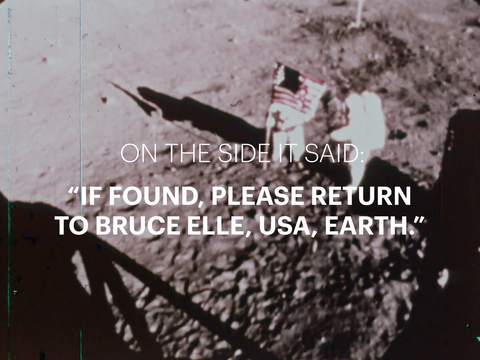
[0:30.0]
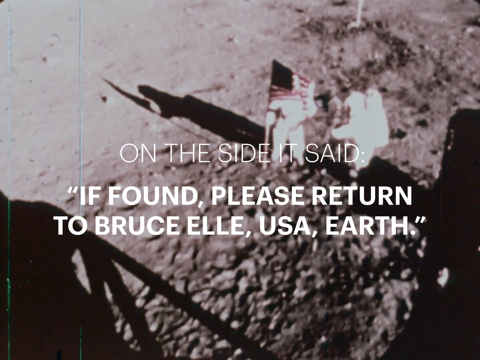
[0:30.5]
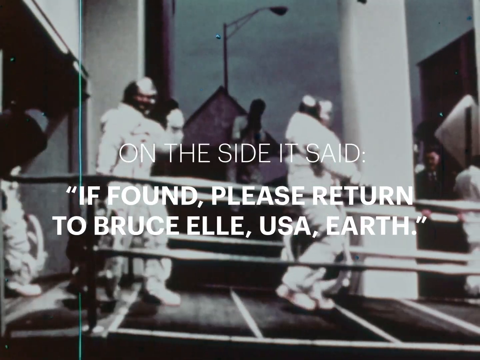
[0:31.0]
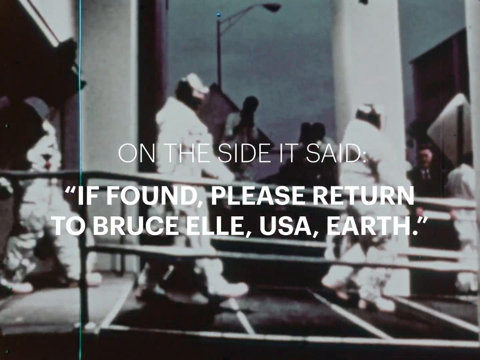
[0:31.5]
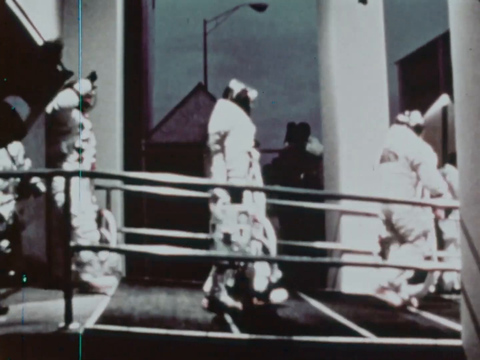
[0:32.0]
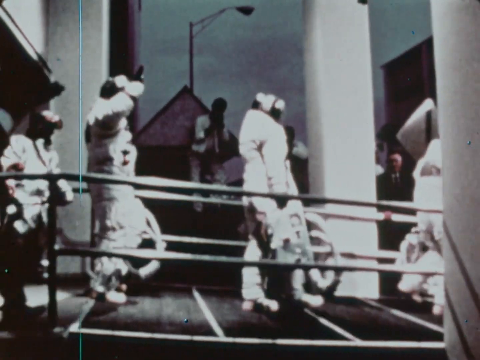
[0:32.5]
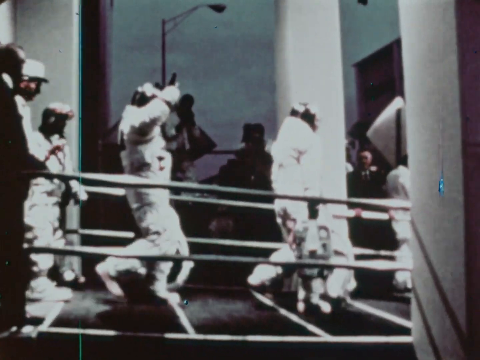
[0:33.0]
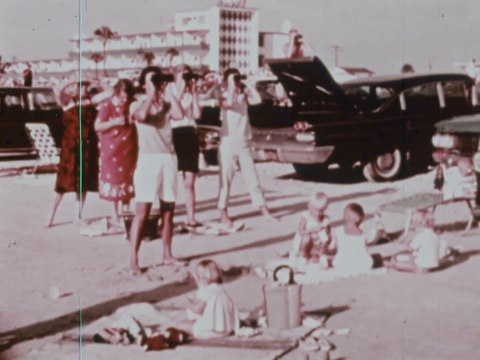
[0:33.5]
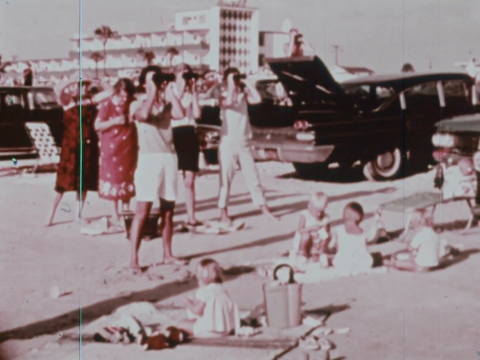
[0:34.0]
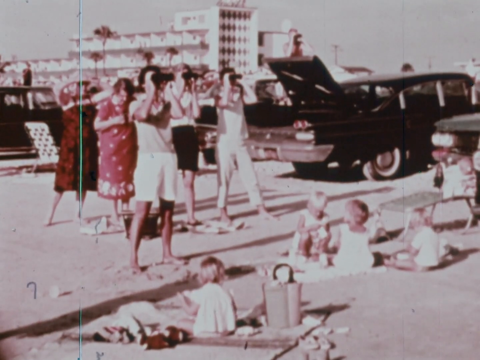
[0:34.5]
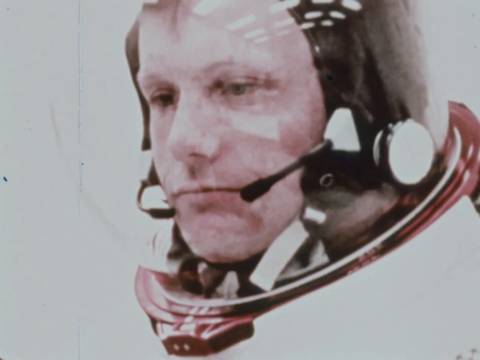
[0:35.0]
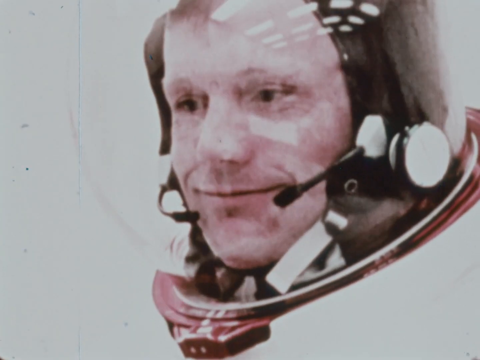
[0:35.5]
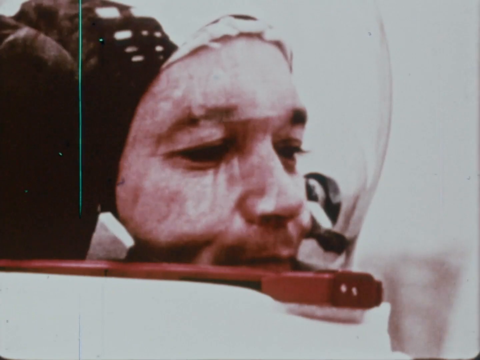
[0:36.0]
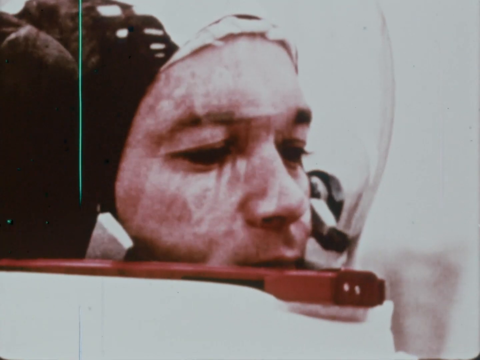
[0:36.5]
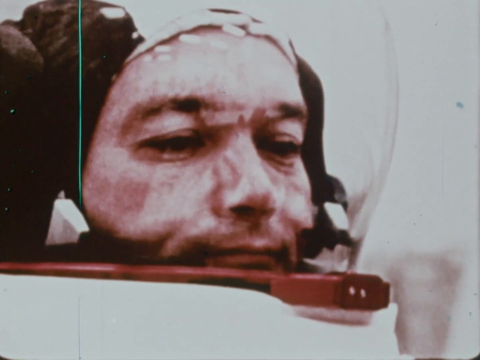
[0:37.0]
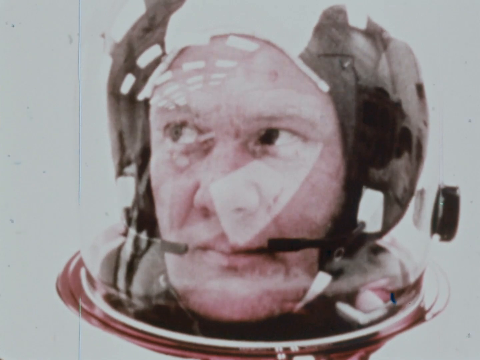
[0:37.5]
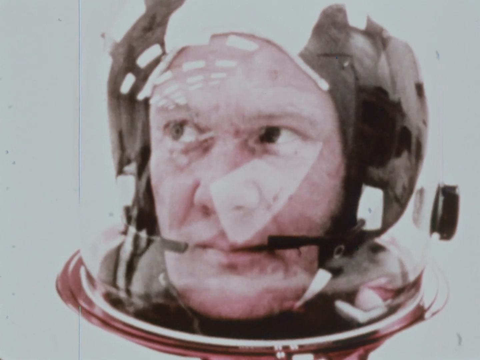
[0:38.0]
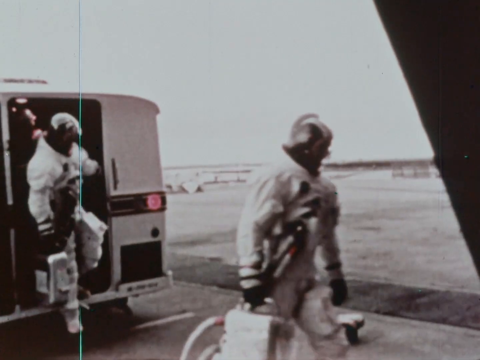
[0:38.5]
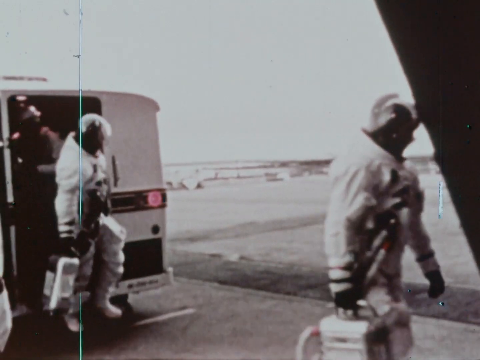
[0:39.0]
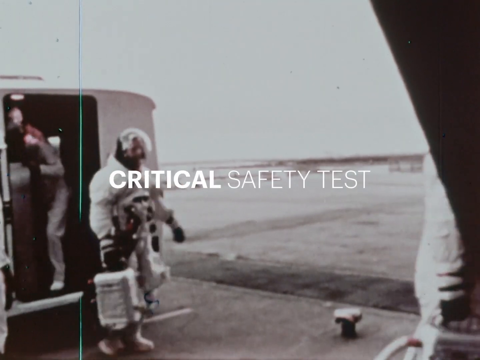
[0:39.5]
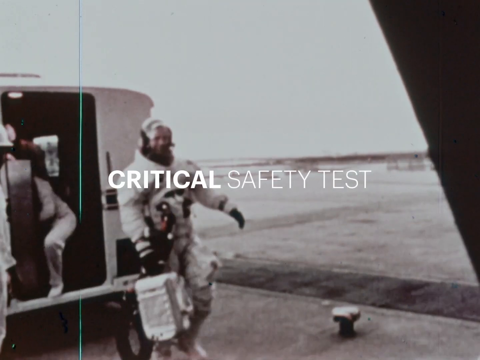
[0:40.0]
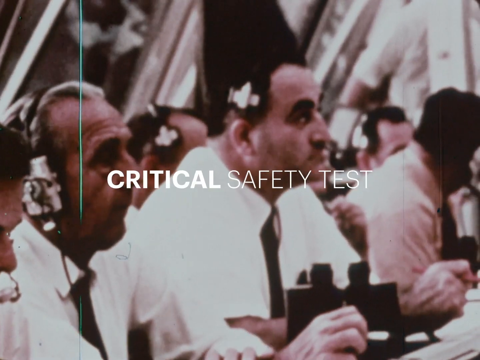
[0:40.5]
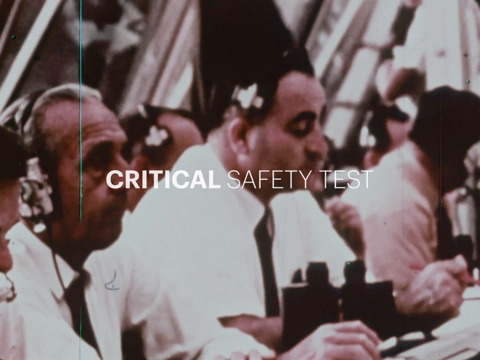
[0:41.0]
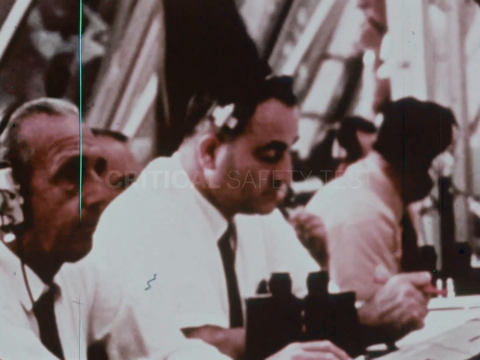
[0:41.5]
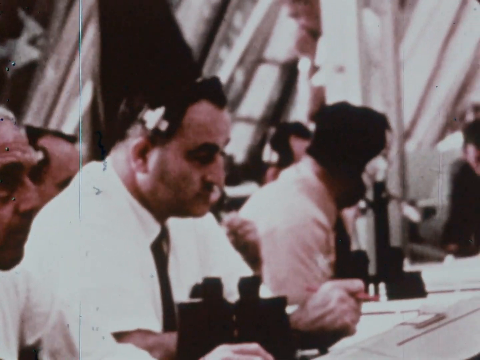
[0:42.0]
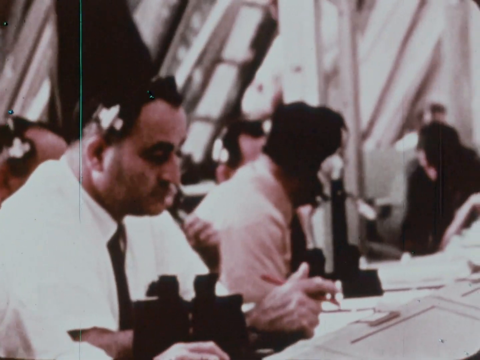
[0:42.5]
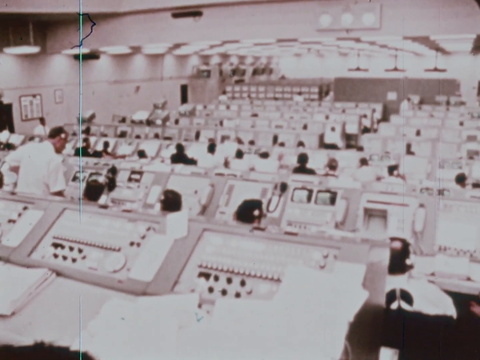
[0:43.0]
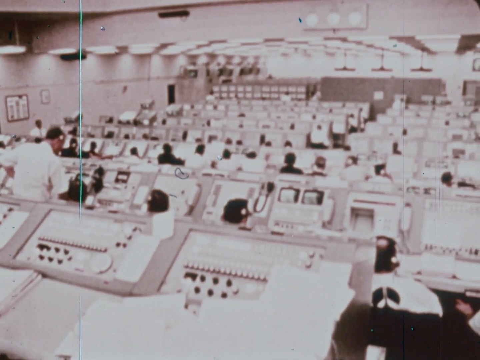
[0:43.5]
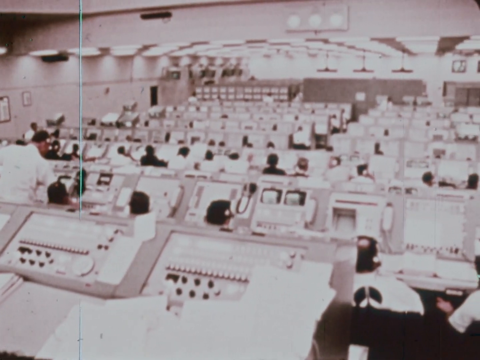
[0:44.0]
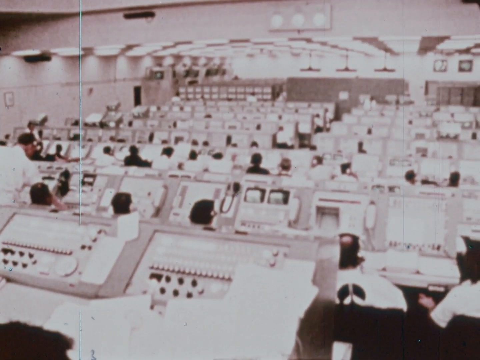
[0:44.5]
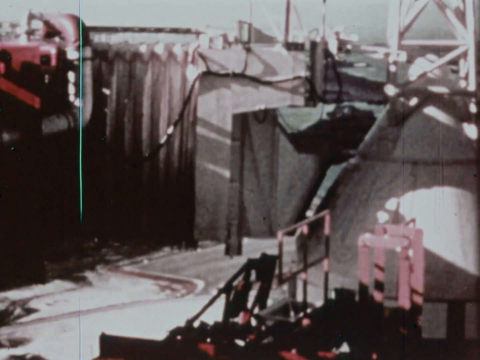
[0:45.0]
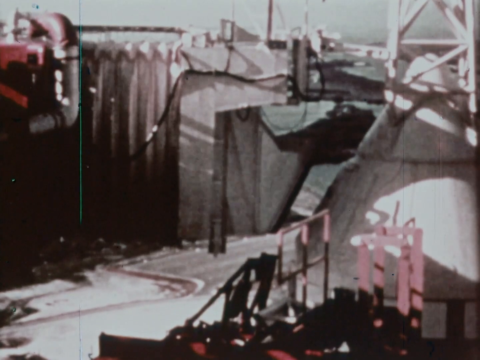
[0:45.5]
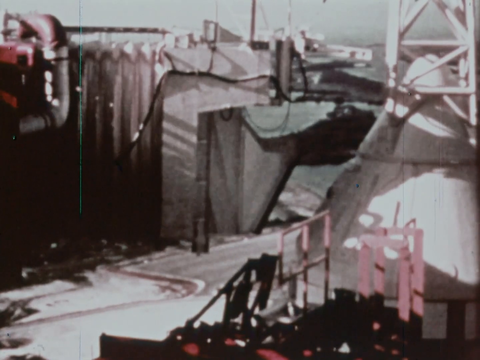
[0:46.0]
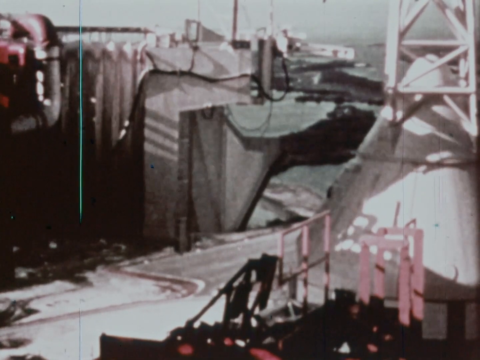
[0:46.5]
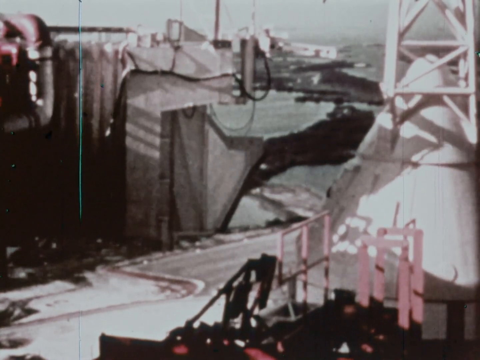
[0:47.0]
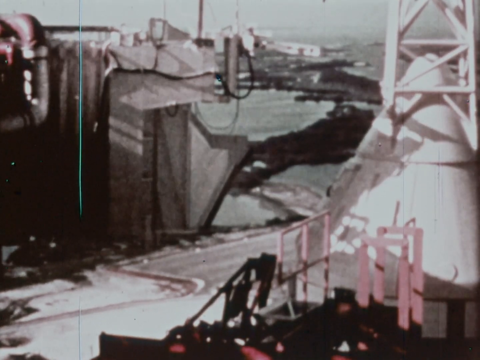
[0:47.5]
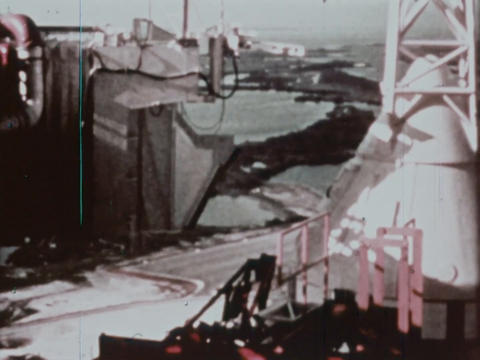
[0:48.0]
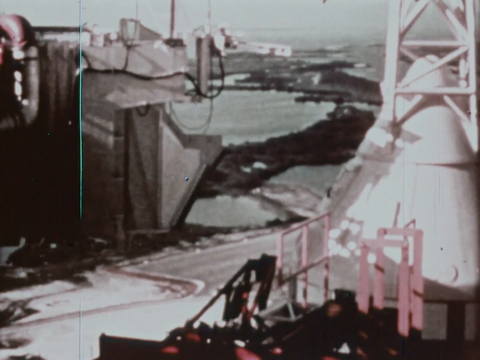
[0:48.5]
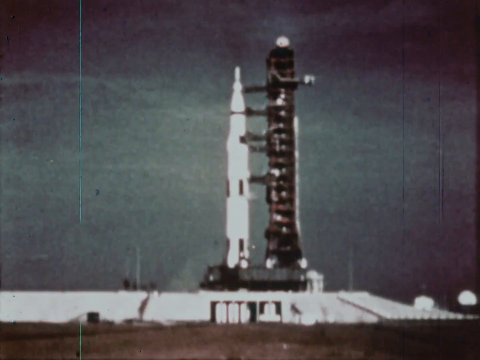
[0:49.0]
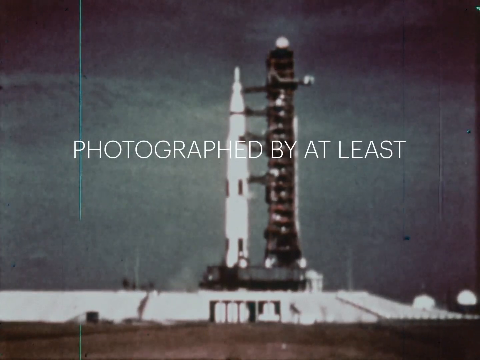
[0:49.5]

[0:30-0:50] The two astronauts stand on the moon's surface planting the American flag next to them, with their shadows and the shadow of the spaceship next to them visible. Text in the middle of the screen reads "on the side it said if found please return to Bruce L USA Earth." A video clip then shows astronauts walking alongside a surface, followed by several people who appear to be in a beach-type setting on what looks like a sunny, bright day. Close-up video images of astronauts follow, and the words "critical safety test" appear in the middle. Next is a very large room with many computers, wires, buttons and controls, with people sitting in front of these stations. The video then shows a spaceship being readied for takeoff.